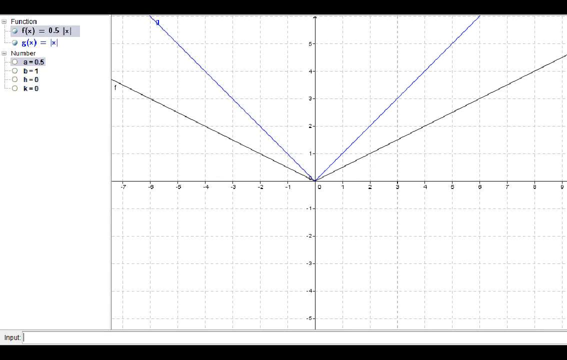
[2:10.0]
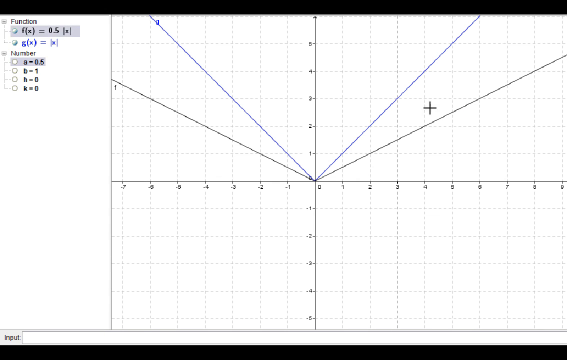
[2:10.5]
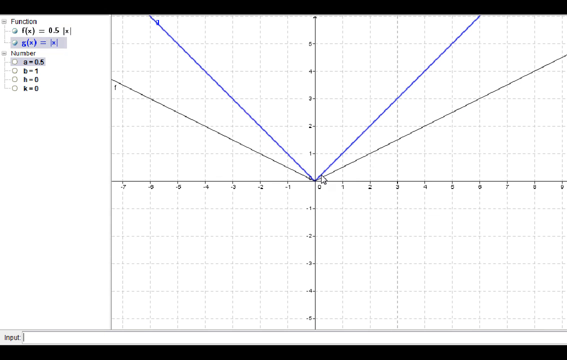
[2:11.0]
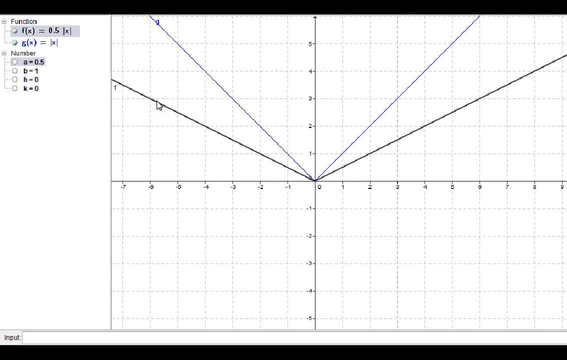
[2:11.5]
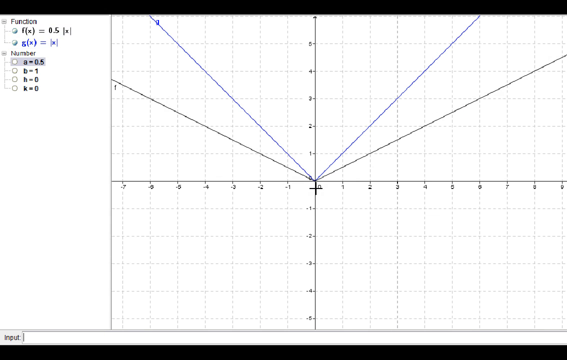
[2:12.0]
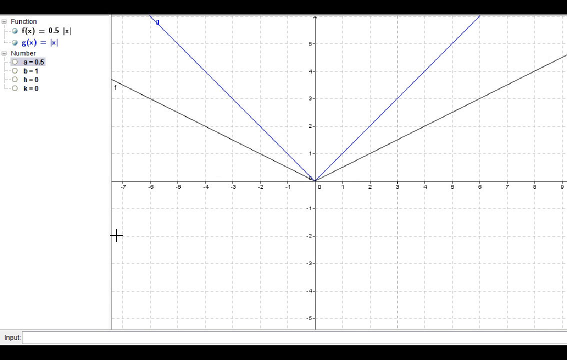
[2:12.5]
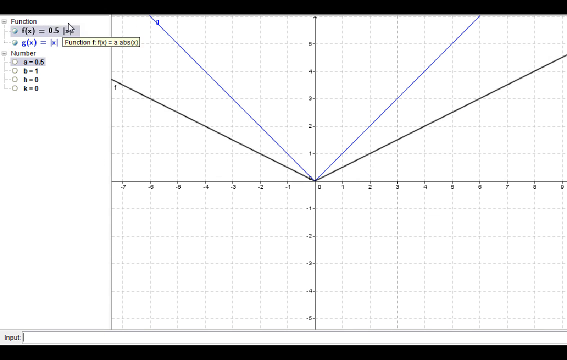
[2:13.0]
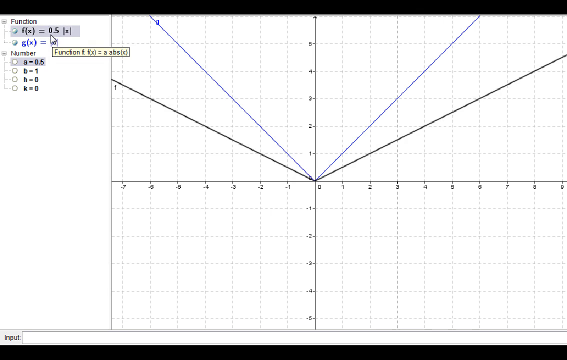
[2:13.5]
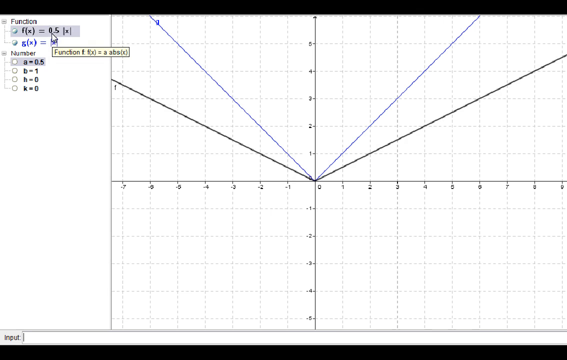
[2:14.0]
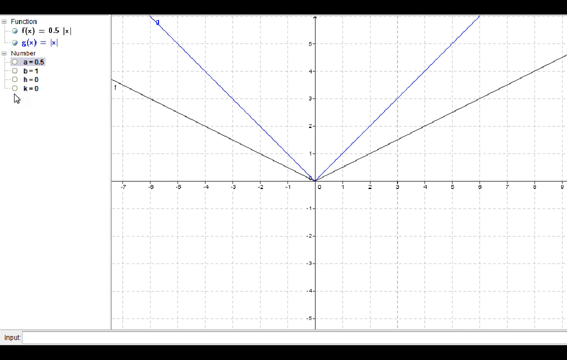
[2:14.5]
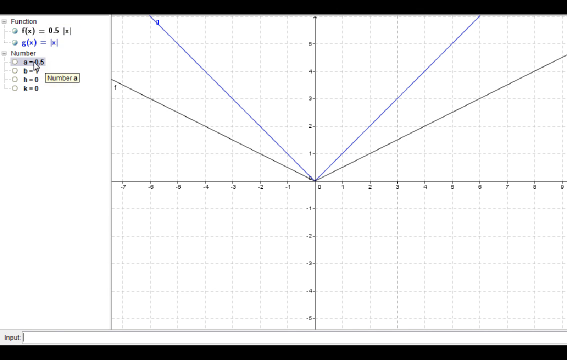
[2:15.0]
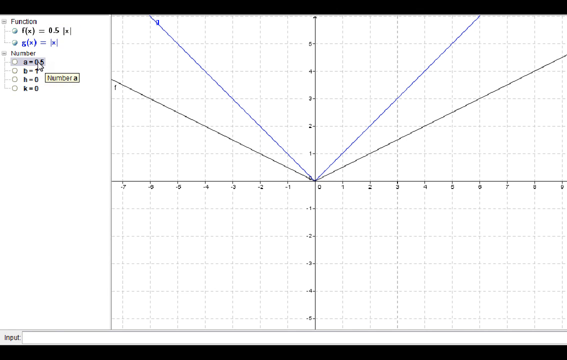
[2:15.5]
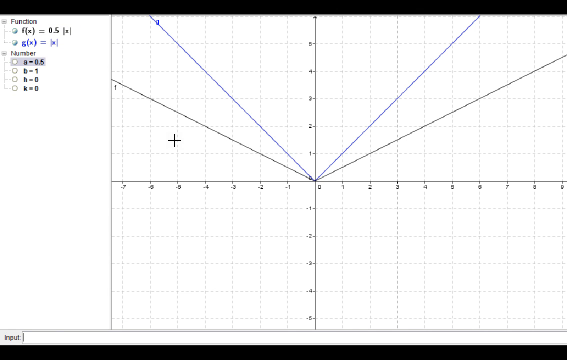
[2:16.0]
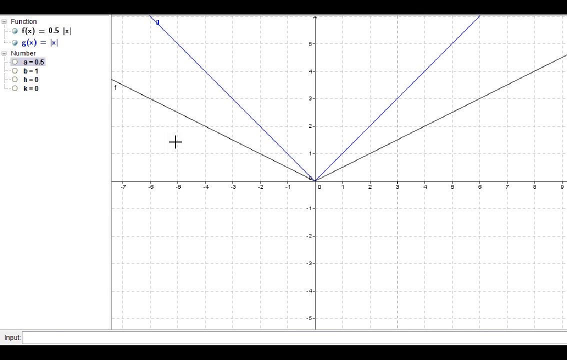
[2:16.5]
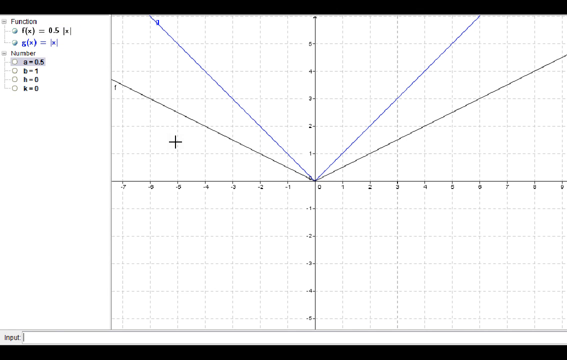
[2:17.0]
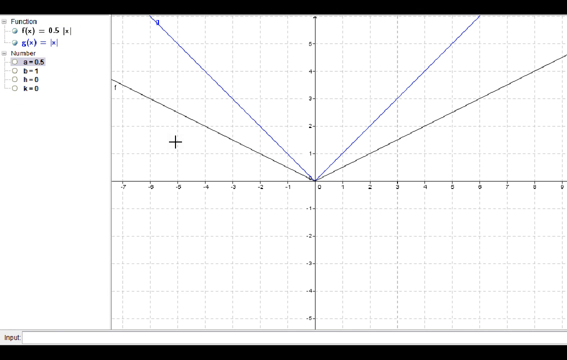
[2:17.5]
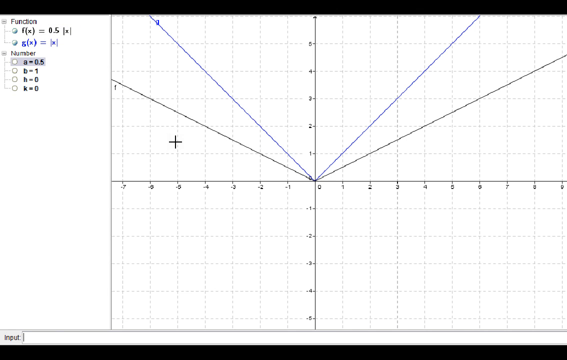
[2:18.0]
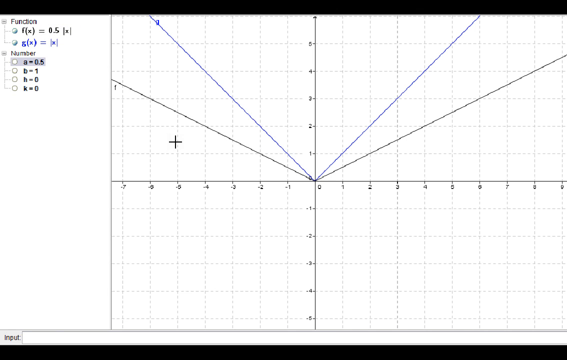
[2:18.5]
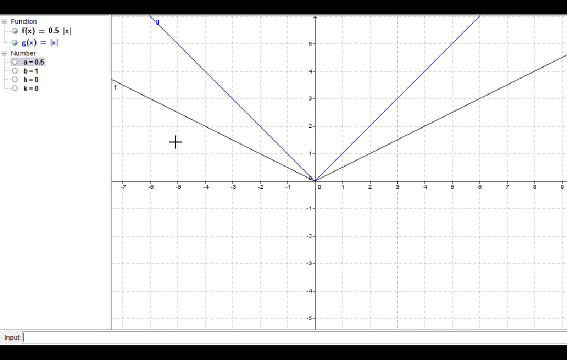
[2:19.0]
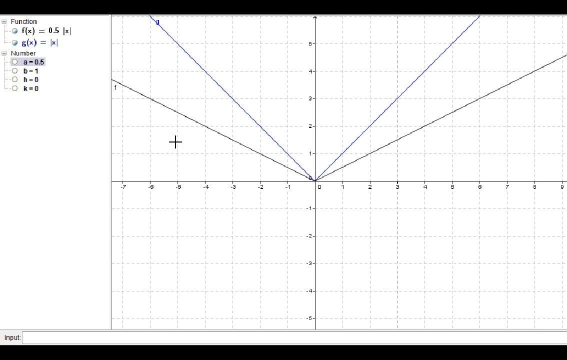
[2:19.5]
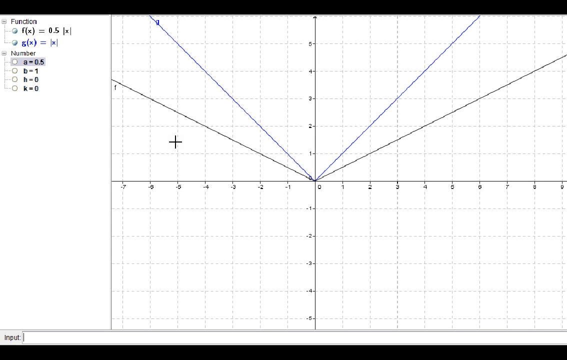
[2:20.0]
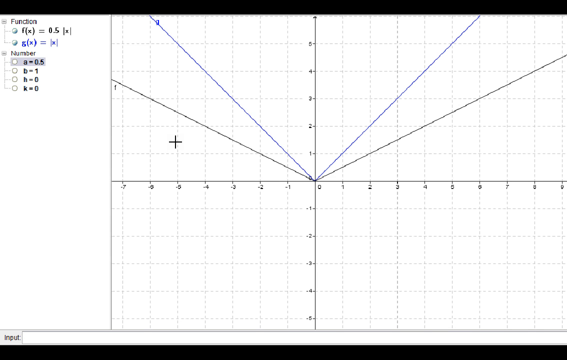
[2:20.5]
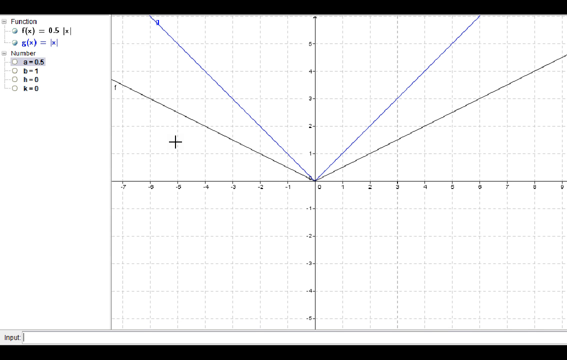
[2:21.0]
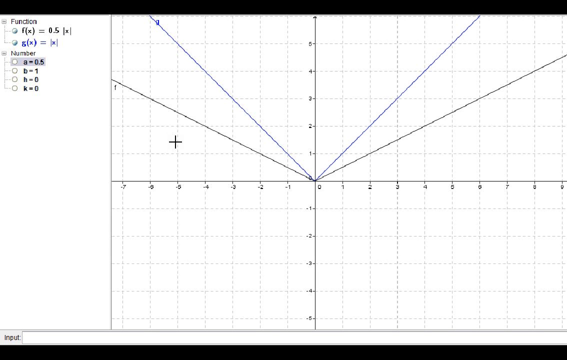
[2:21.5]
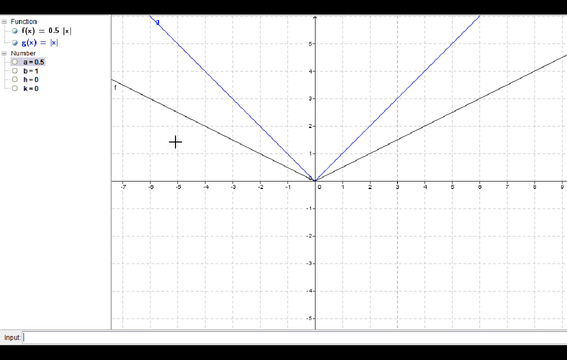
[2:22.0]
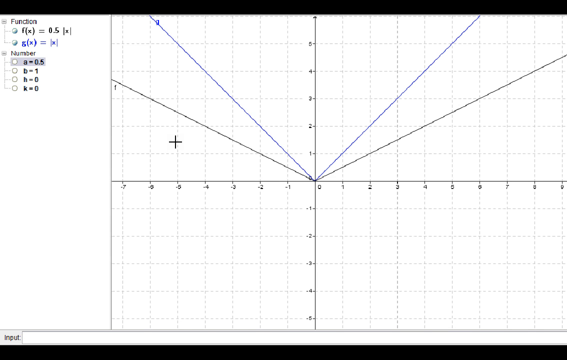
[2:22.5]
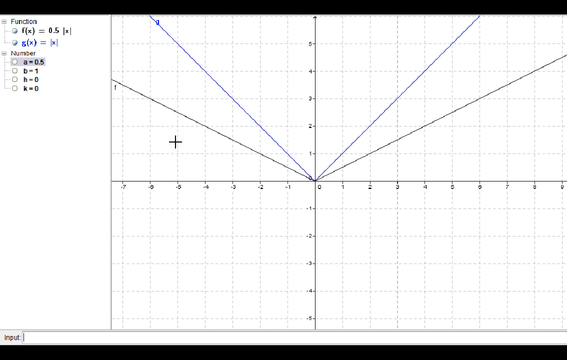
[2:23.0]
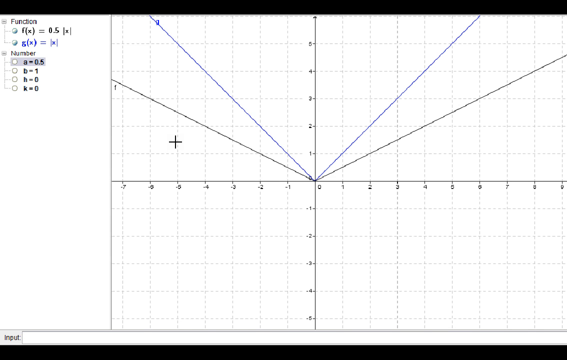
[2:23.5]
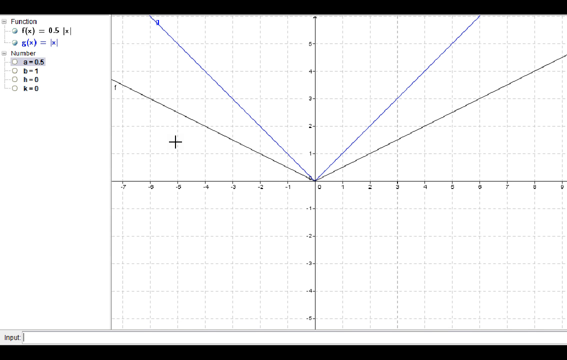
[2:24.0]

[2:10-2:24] A sort of transparent screen continues to show the linear functions after they have been changed, along with the graph. The person hovers around the screen over the 2D graph with positive and negative values. The video ends after showing the linear functions, with no visible physical subjects.